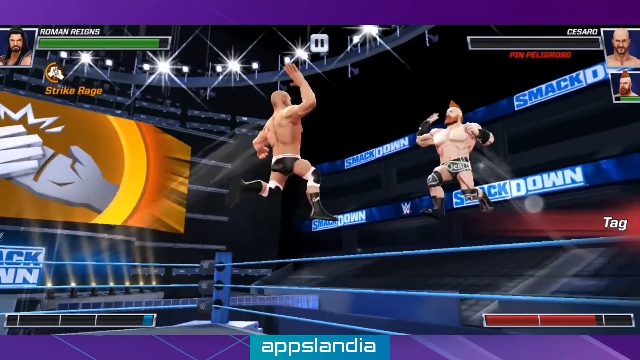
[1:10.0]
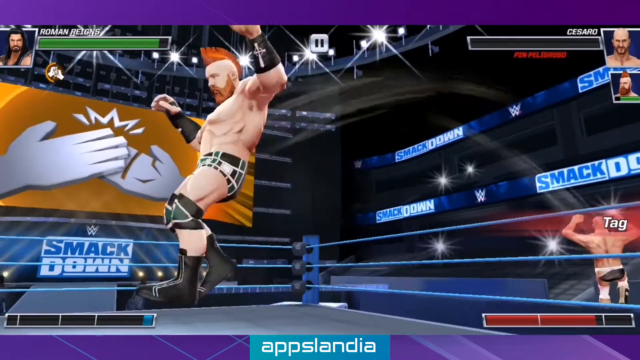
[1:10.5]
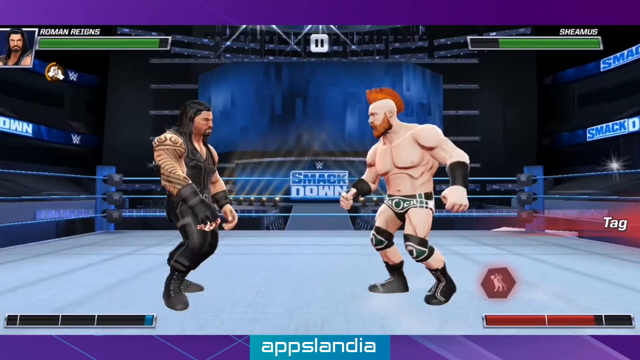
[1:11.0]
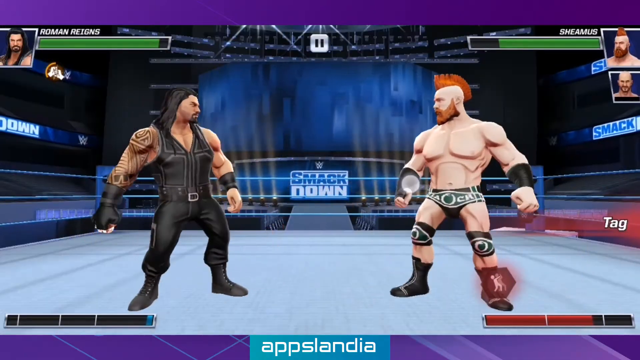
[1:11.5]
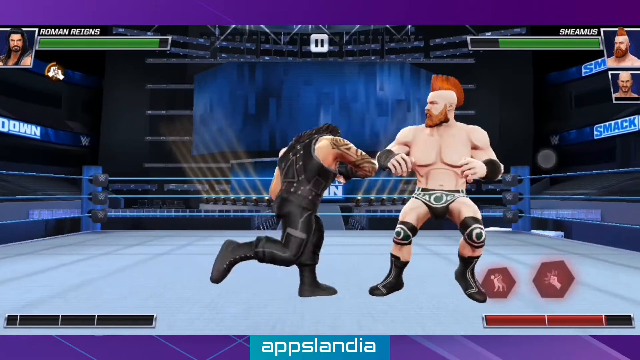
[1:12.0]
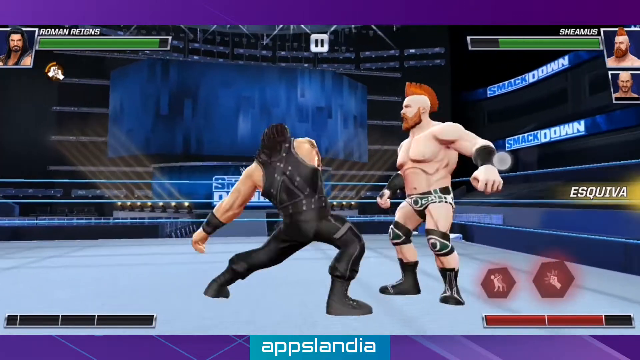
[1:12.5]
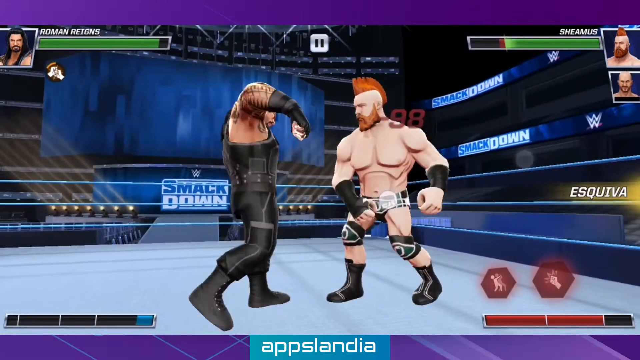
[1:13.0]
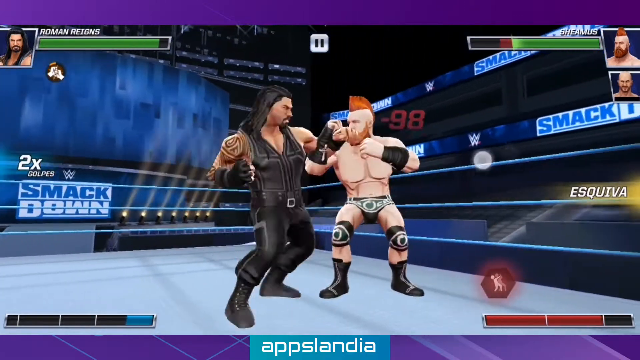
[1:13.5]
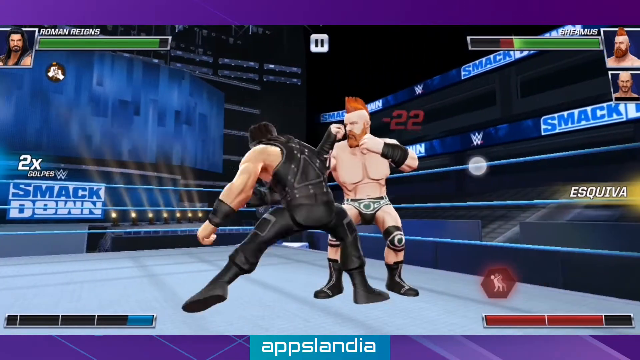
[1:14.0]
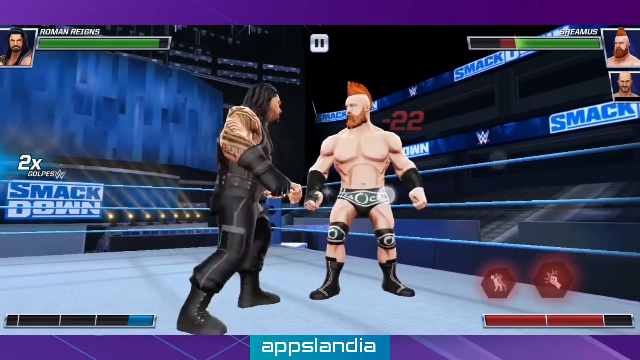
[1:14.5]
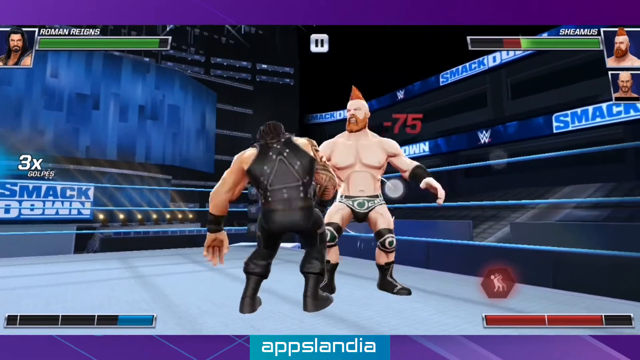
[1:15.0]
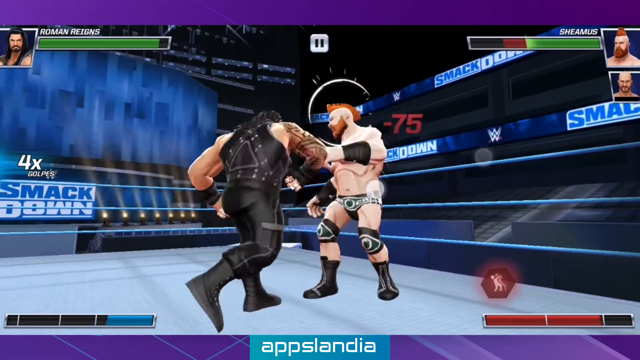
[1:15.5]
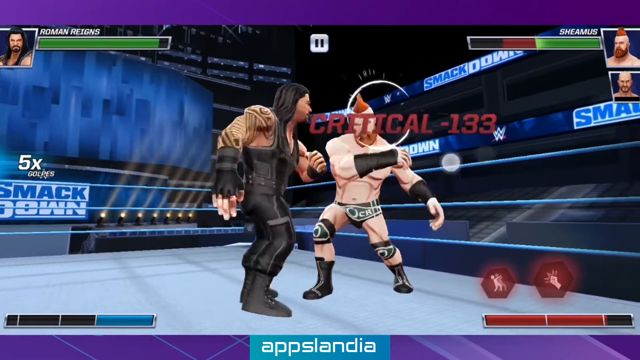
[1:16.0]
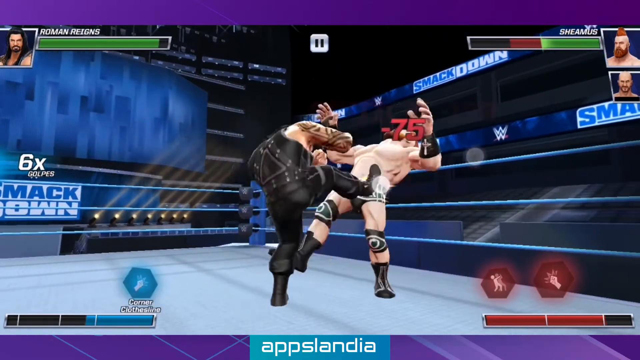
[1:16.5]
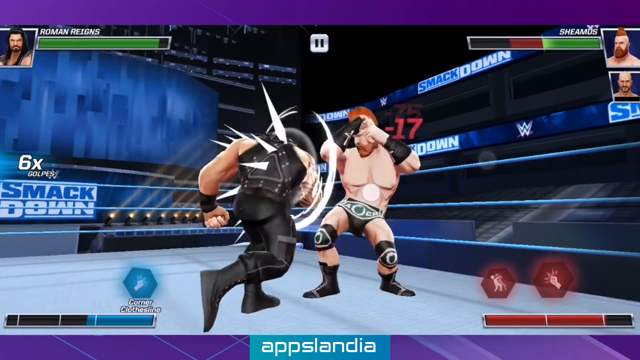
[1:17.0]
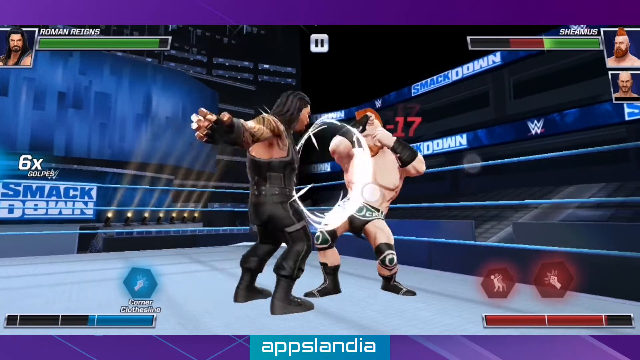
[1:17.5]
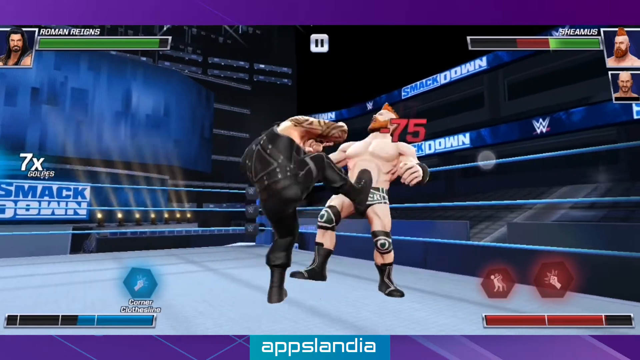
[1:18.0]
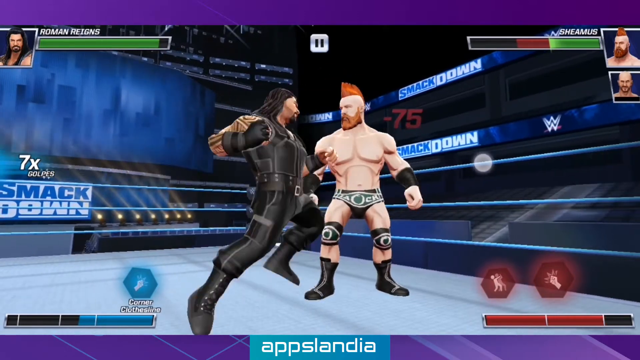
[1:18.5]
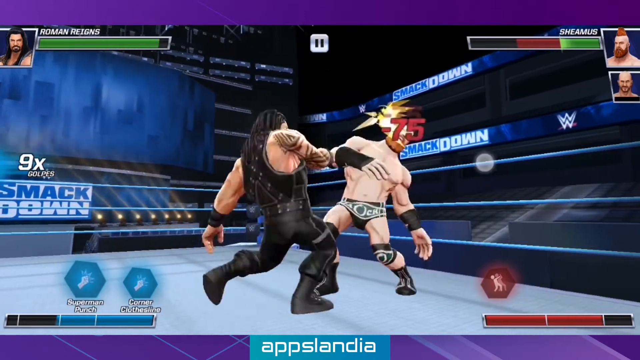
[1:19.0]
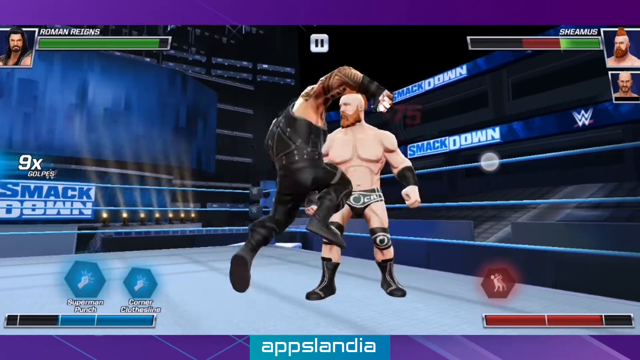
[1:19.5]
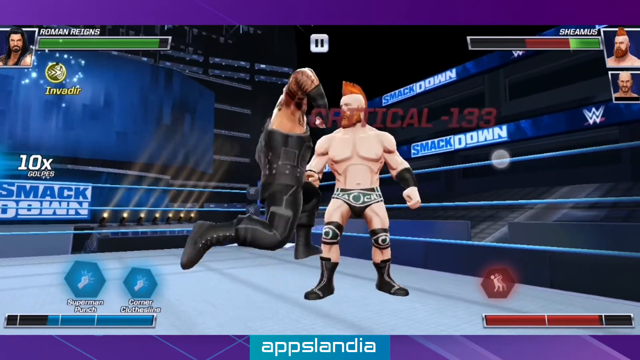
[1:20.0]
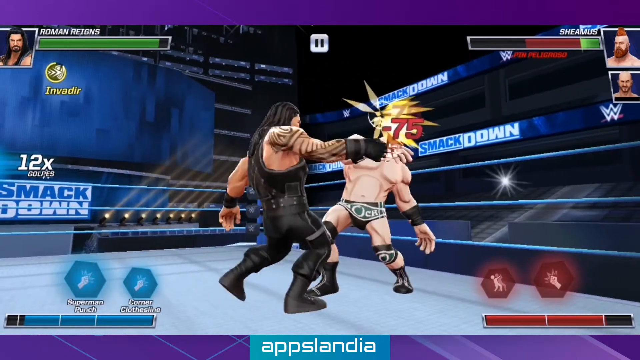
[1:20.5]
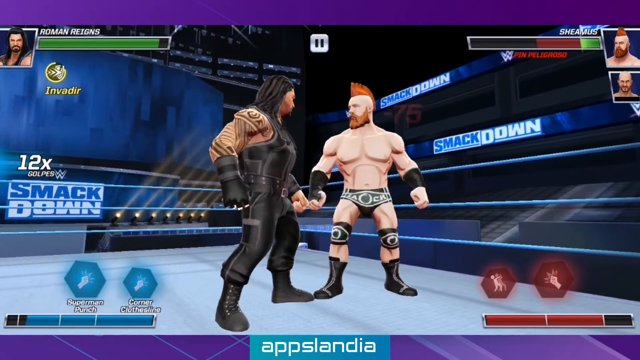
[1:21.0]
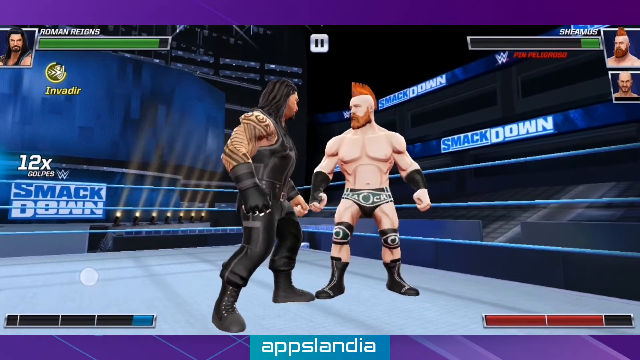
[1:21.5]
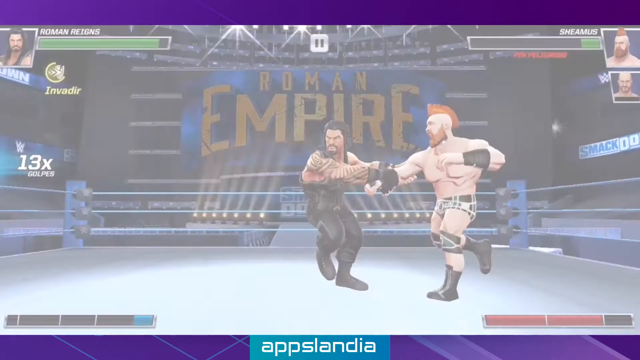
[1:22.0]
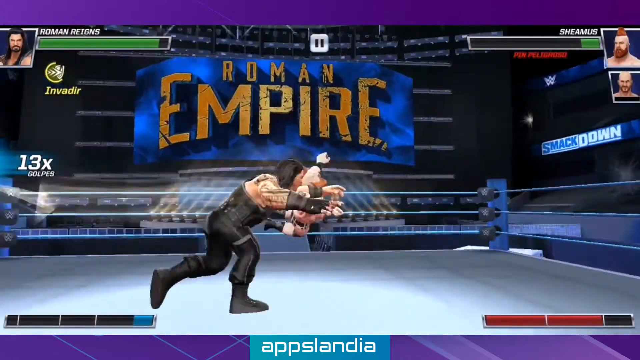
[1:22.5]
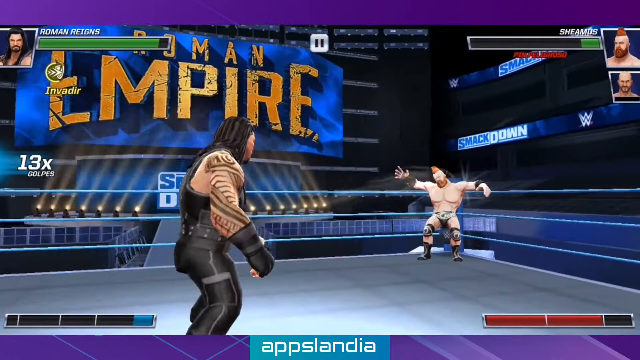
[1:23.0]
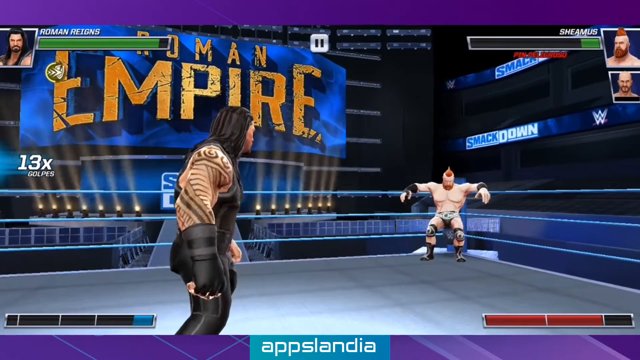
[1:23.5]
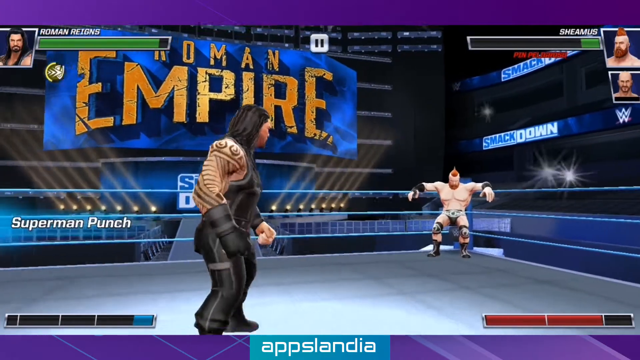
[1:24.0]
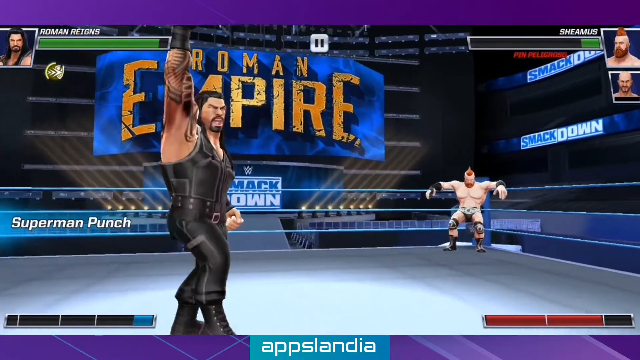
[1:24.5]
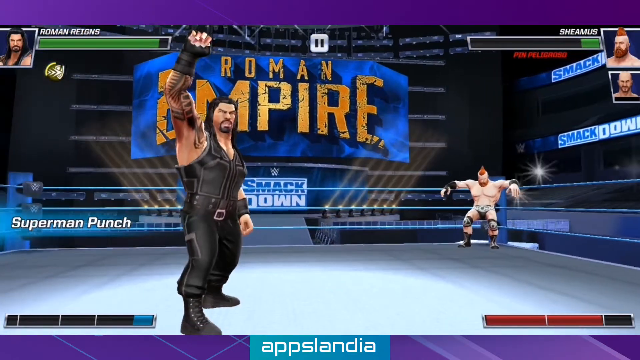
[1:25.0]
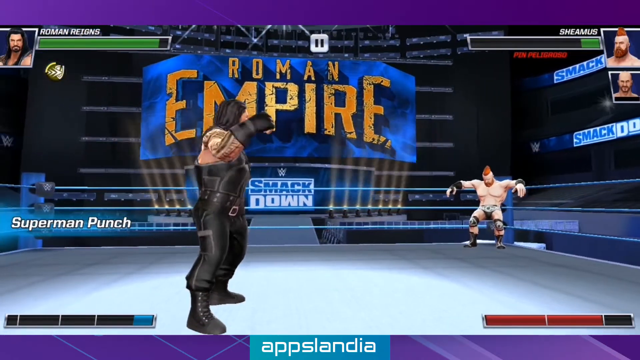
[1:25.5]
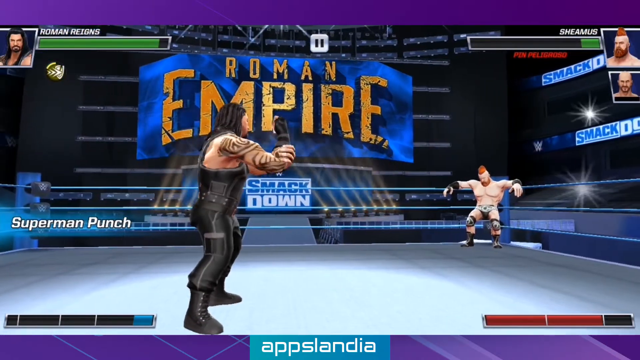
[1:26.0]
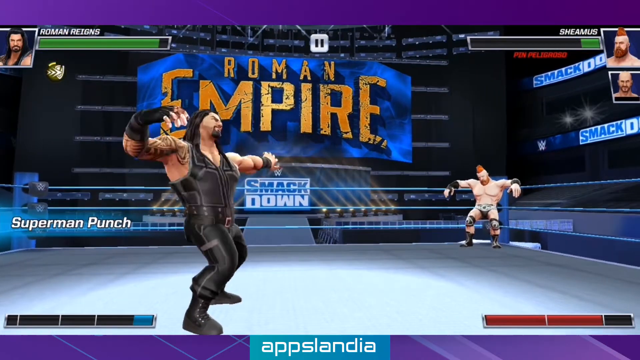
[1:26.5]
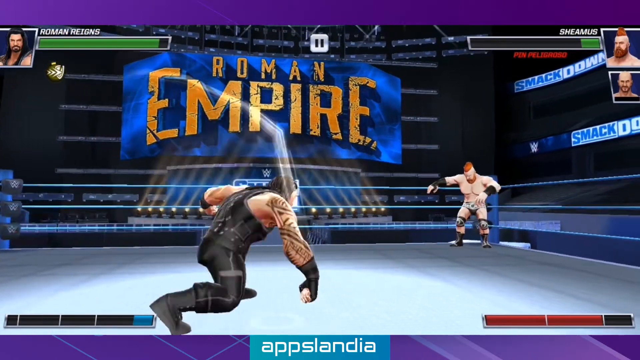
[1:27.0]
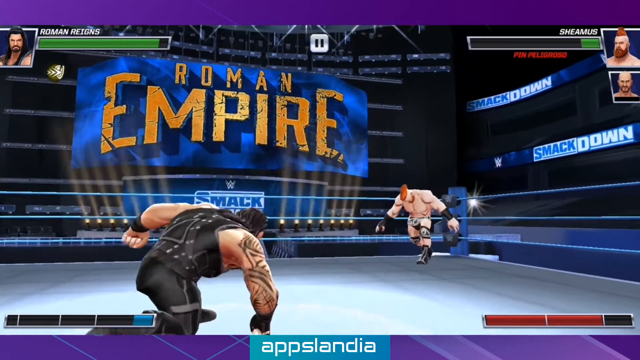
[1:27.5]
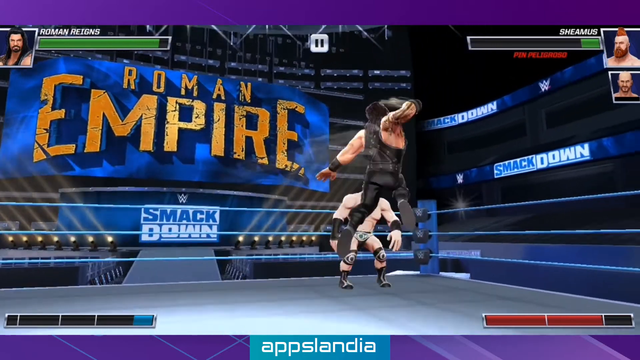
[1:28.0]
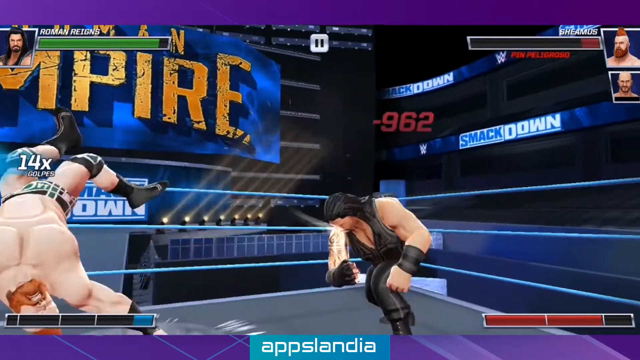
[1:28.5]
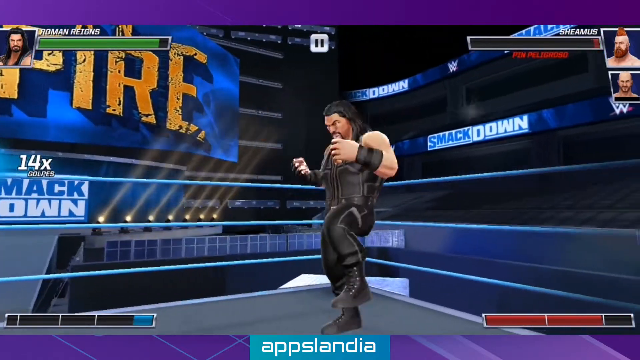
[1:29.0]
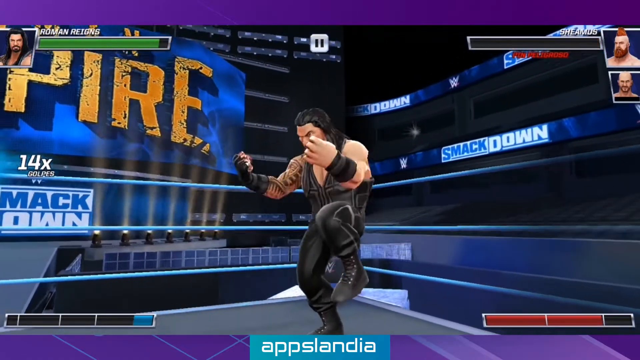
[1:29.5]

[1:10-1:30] After player two switches wrestlers, the second wrestler is still getting beaten up. Player one has barely lost any health, while player two's second wrestler is quickly running out of health. Player one performs some type of combo move and apparently finishes him off. The health bars for both of player two's wrestlers are depleted all the way down.